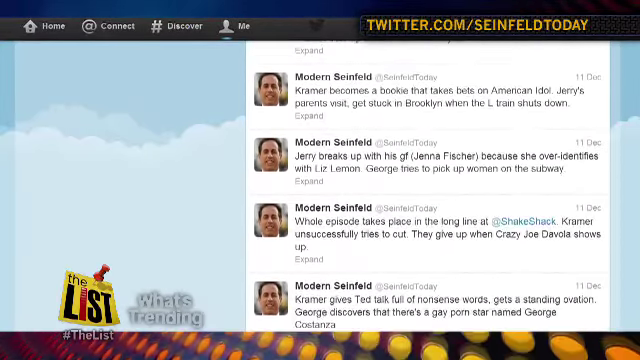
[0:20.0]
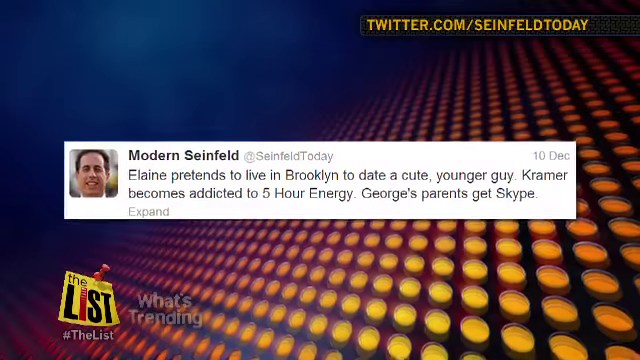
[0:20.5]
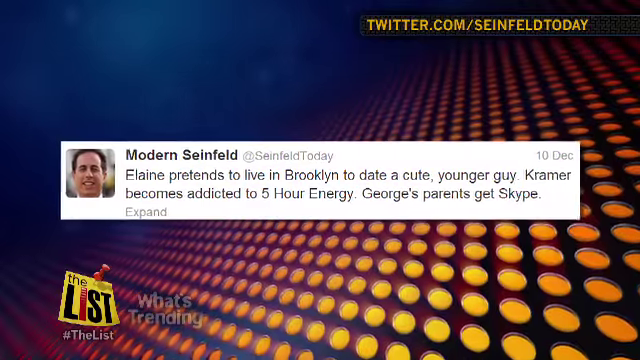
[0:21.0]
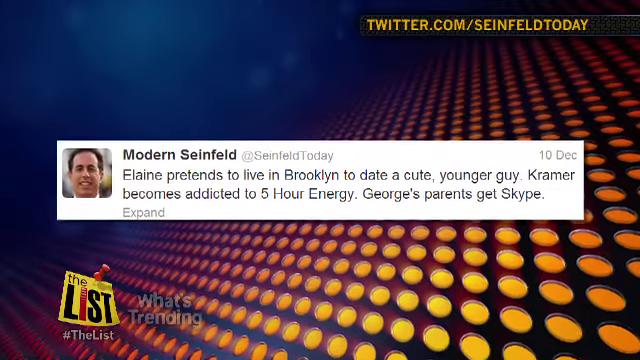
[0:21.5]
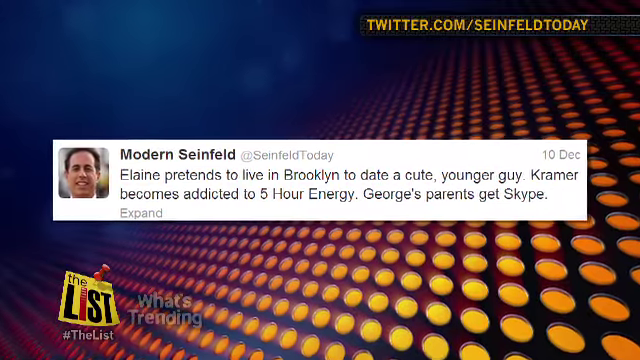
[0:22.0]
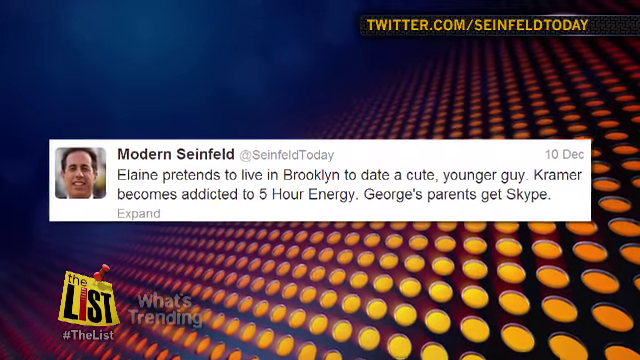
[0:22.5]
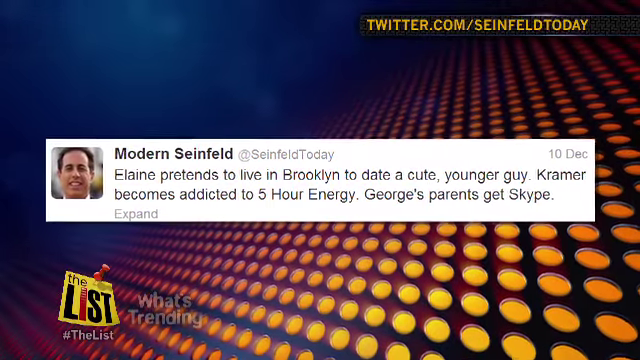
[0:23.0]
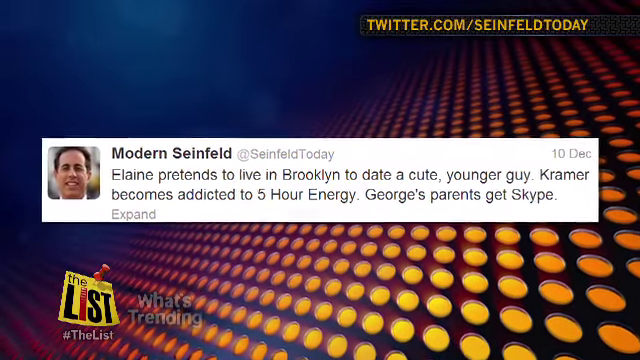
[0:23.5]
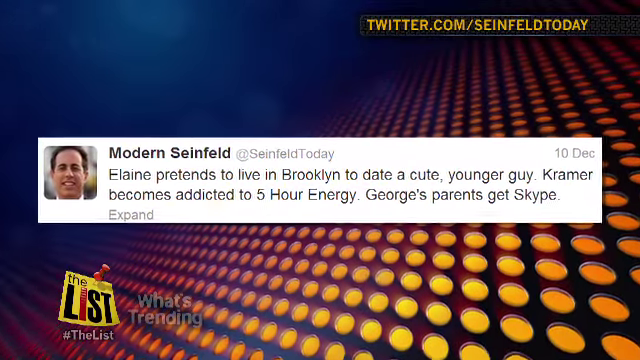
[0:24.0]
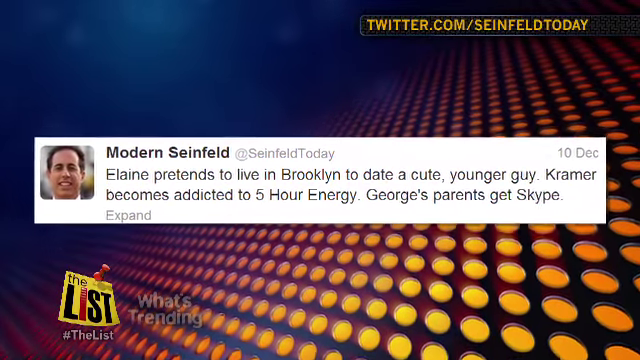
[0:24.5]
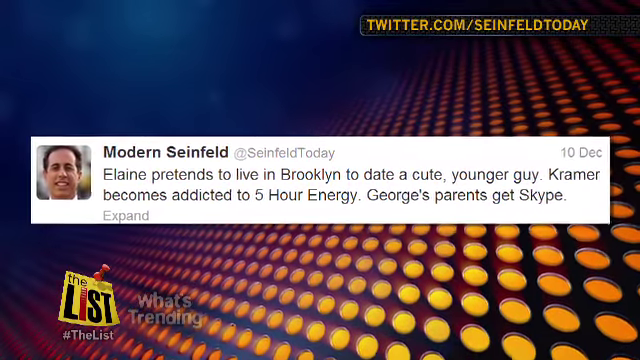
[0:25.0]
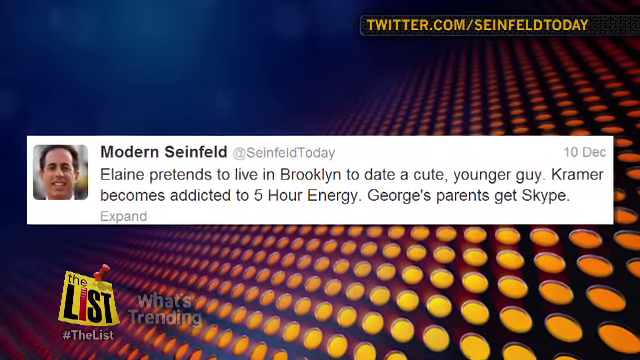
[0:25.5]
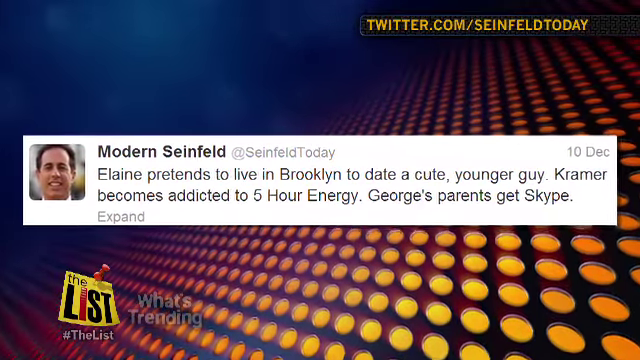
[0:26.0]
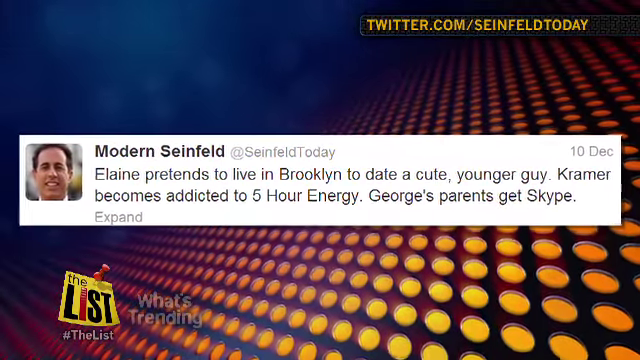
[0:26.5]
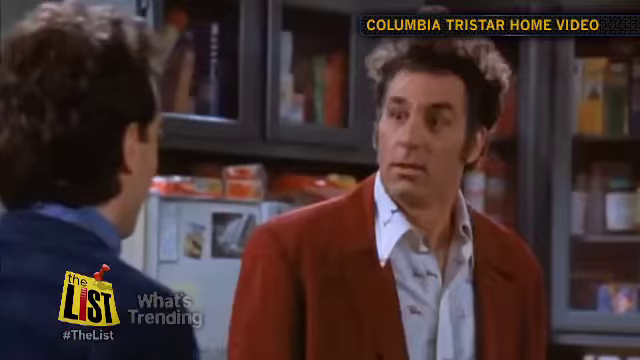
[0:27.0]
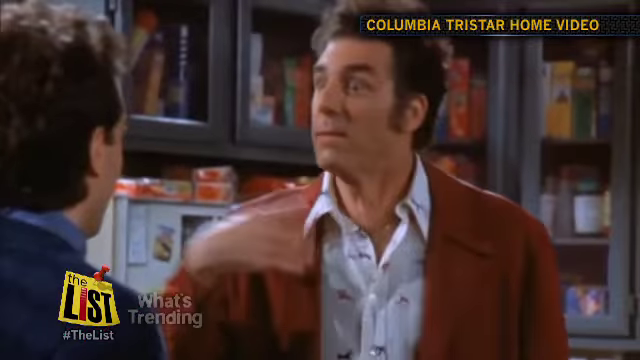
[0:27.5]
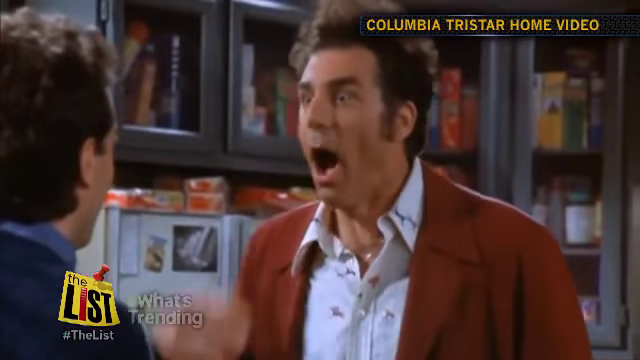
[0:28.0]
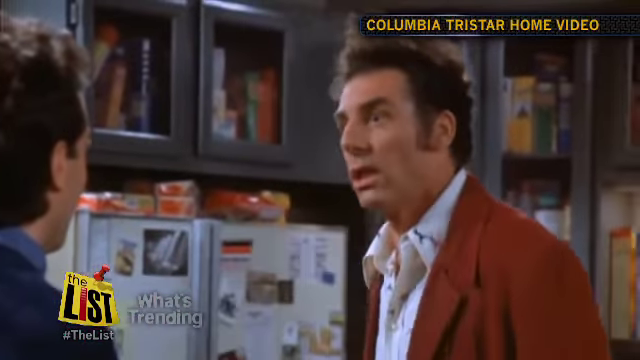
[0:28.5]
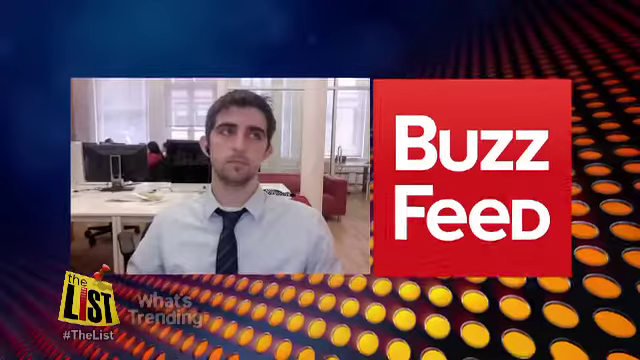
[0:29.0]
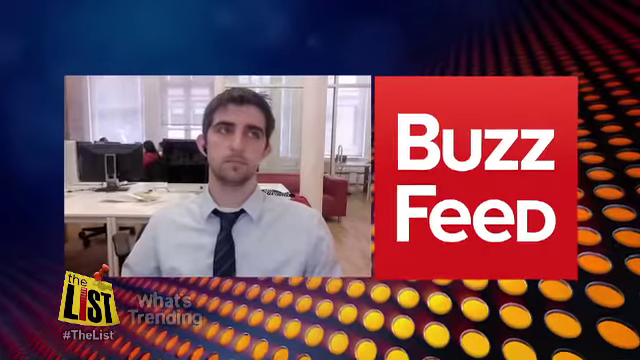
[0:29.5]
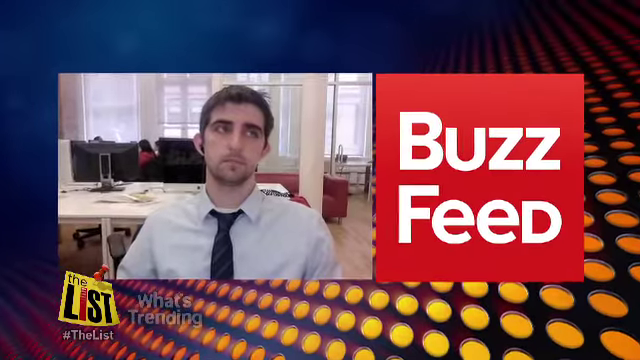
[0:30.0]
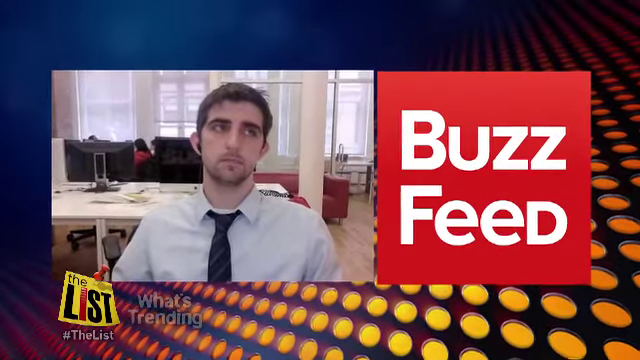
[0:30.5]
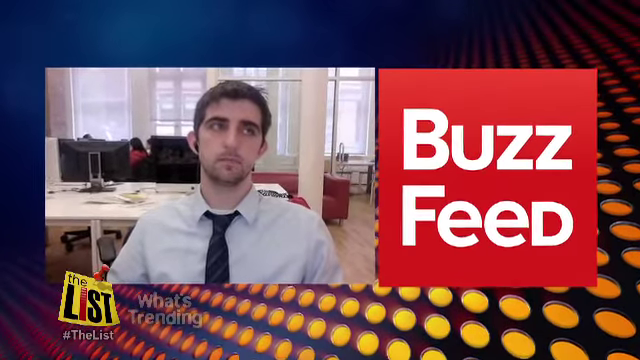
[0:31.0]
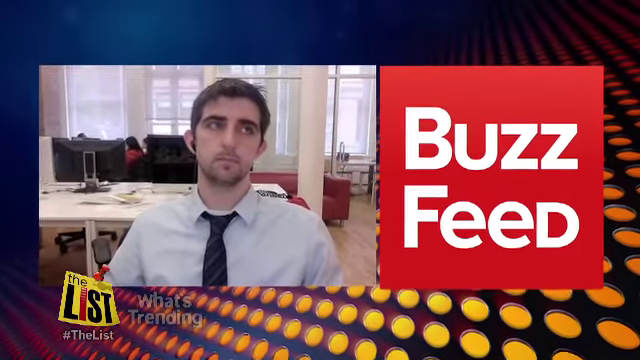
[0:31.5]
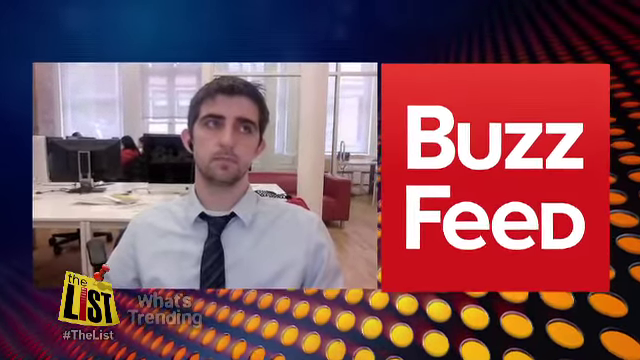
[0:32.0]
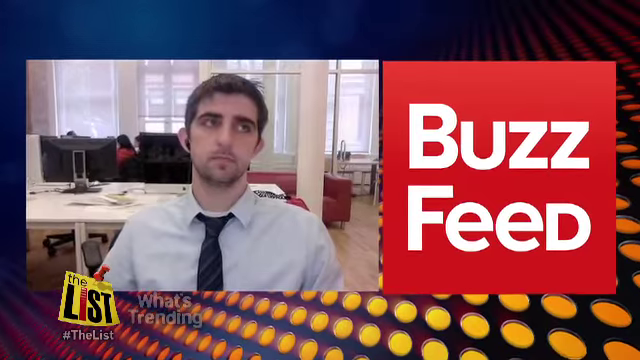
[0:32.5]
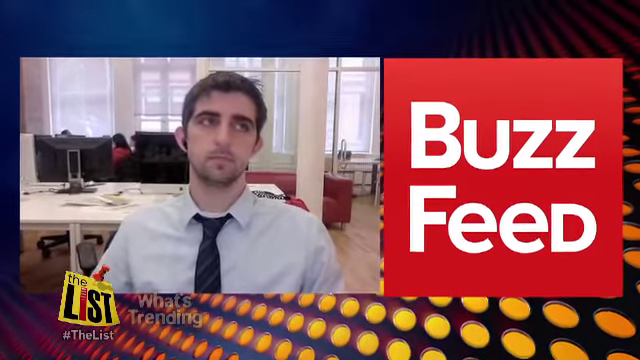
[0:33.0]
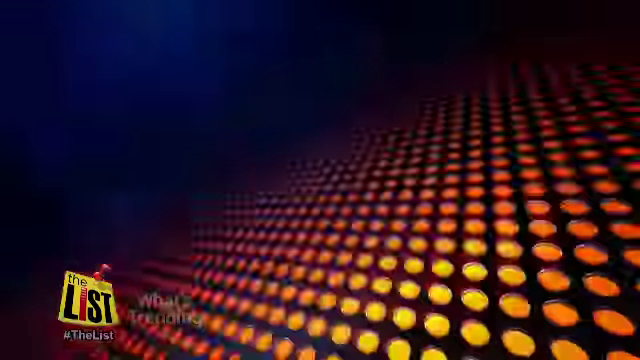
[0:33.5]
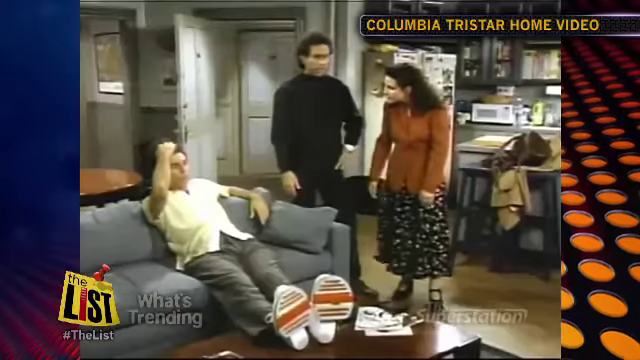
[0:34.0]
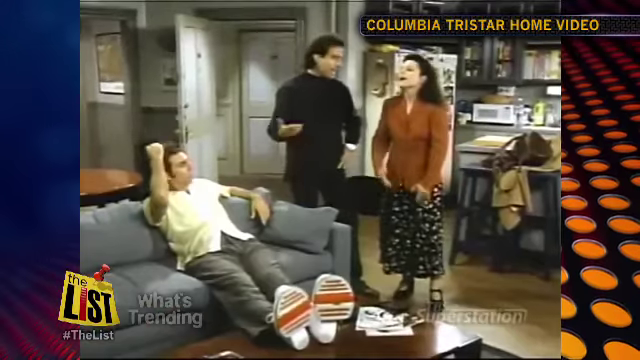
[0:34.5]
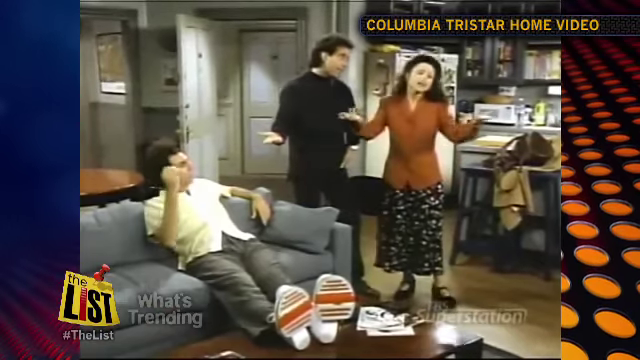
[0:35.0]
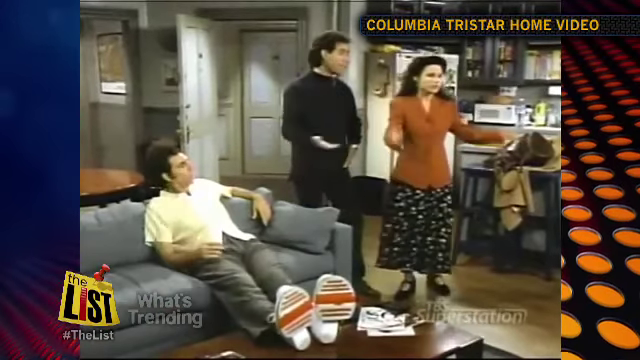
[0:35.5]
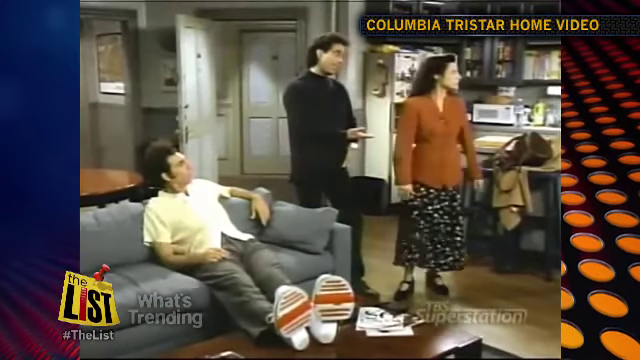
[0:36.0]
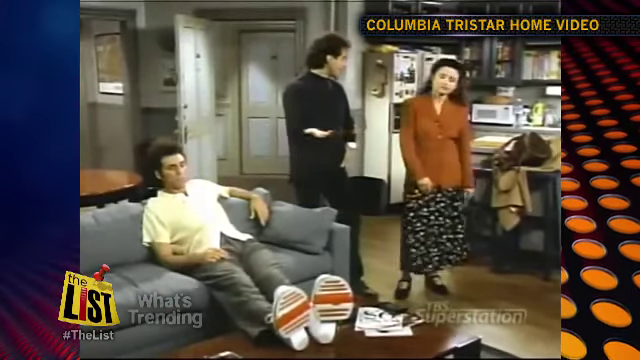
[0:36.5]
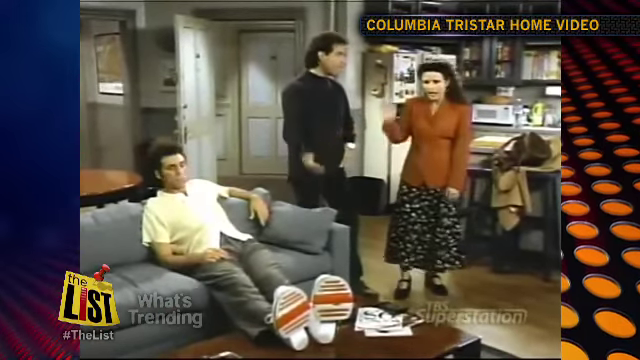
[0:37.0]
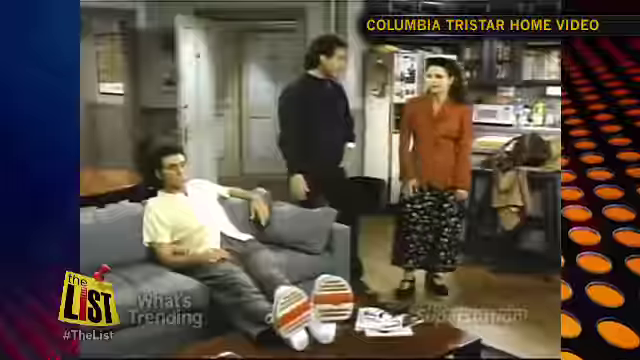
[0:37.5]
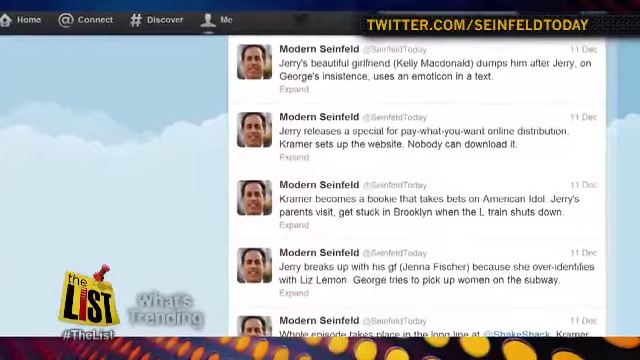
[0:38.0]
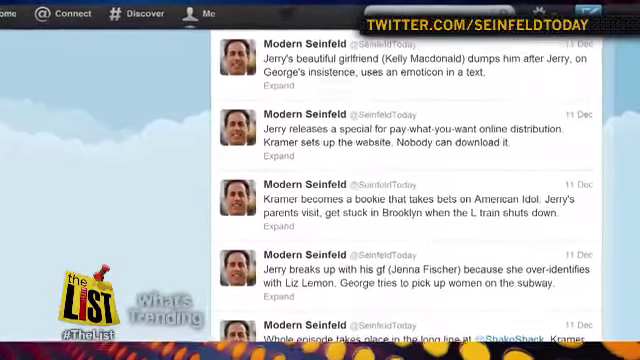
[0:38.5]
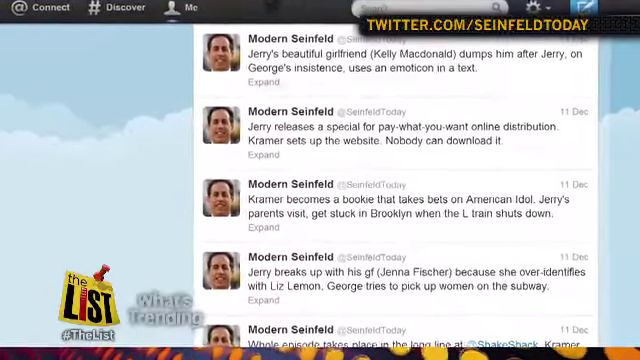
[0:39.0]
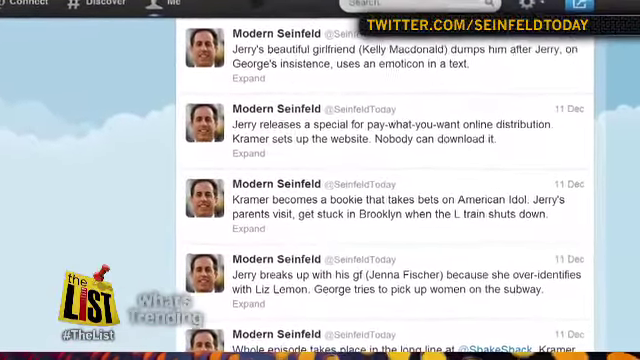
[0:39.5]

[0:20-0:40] Tweets continue to scroll, including ones that read "Jerry's parents visit, get stuck in Brooklyn when the L train shuts down," "George decides to pick up women on the subway," and "Elaine pretends to live in Brooklyn to date a good, younger guy." After the tweets, two men appear, one in a red jacket and one in a blue jacket. A man is then shown sitting in a chair wearing blue. Next, a family of three men and one woman is arguing, and they keep pointing. The video then returns to the tweets.